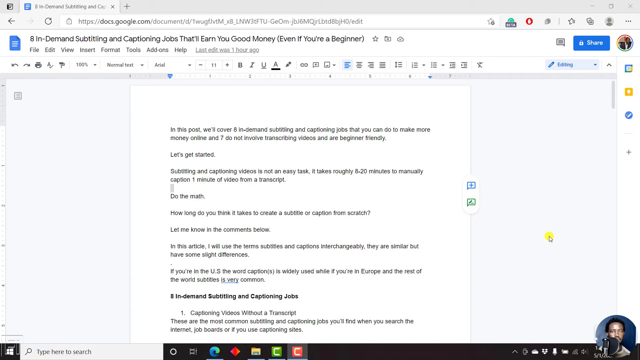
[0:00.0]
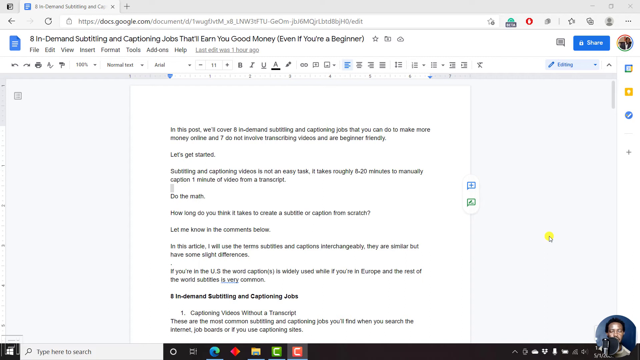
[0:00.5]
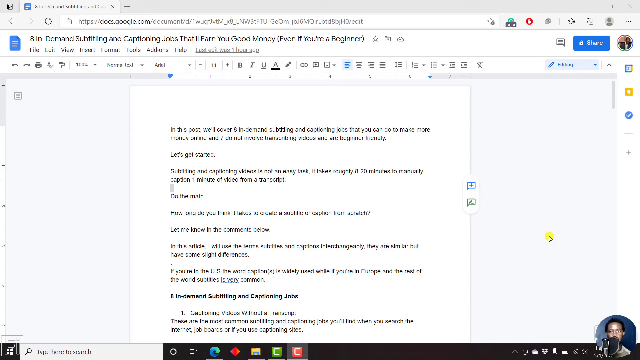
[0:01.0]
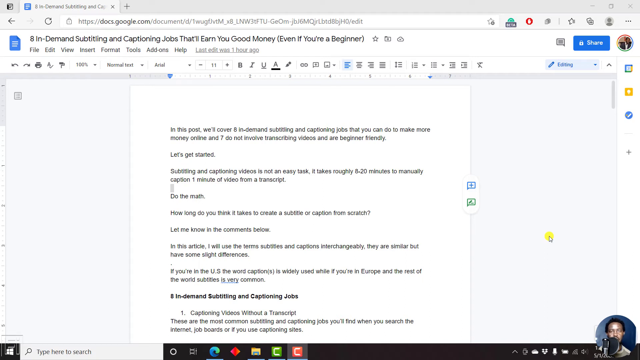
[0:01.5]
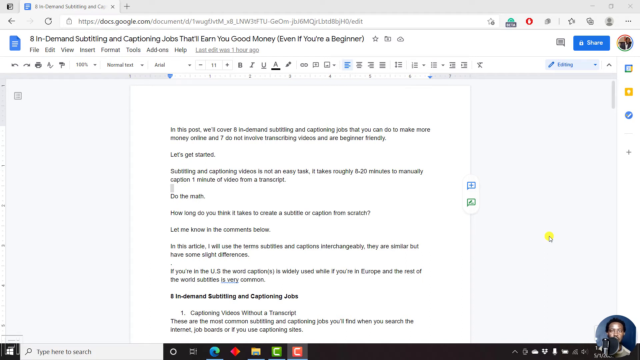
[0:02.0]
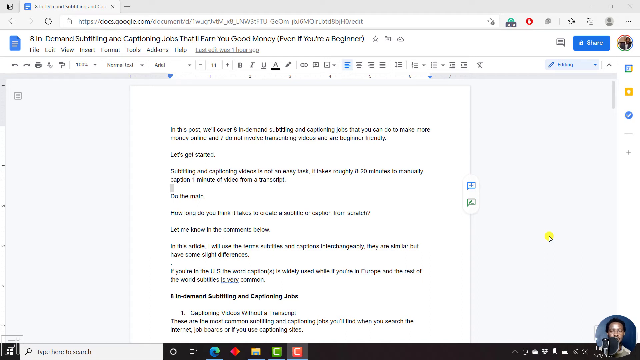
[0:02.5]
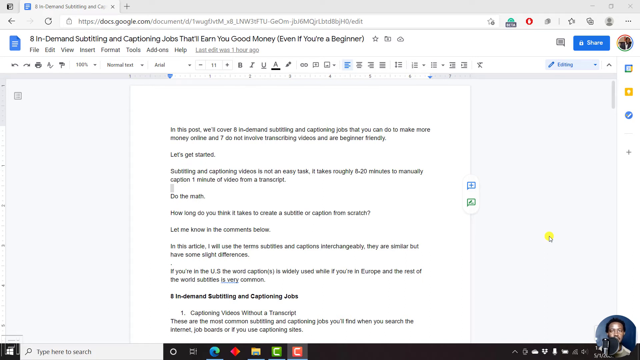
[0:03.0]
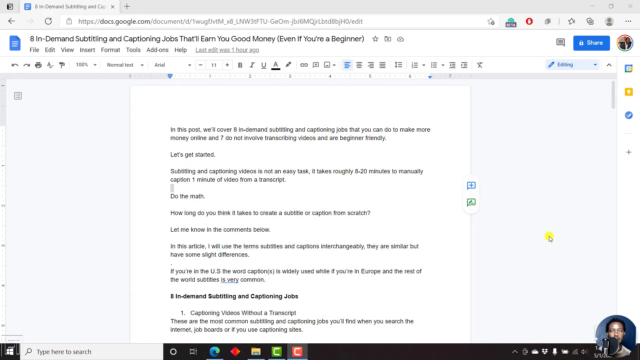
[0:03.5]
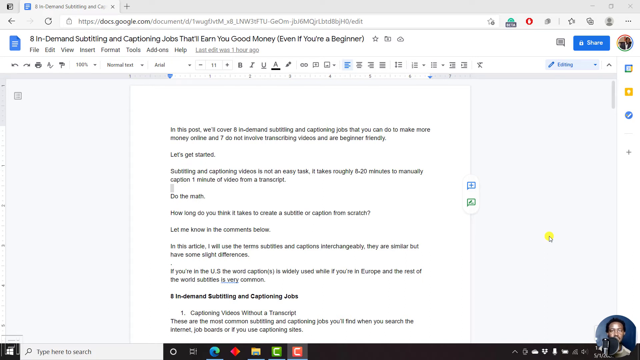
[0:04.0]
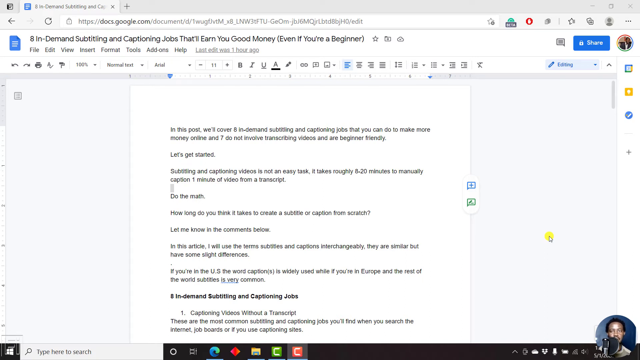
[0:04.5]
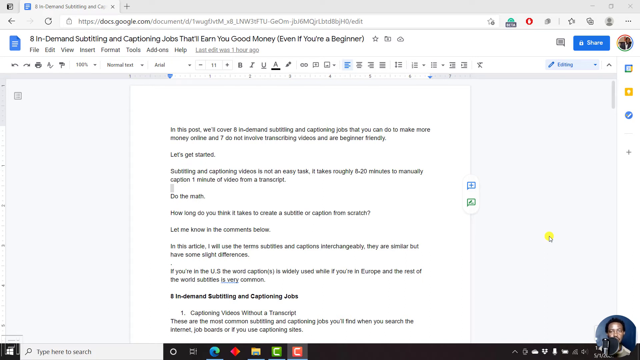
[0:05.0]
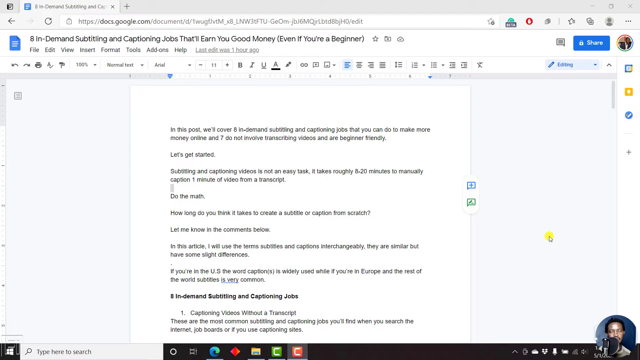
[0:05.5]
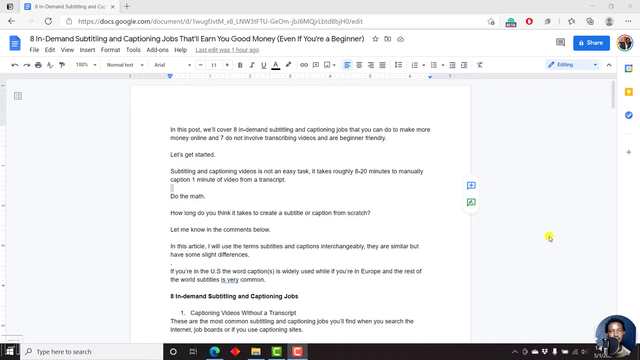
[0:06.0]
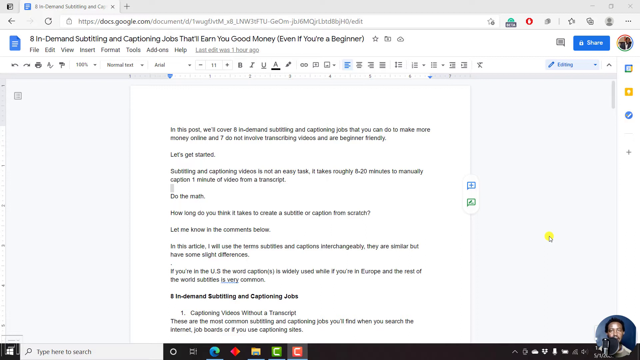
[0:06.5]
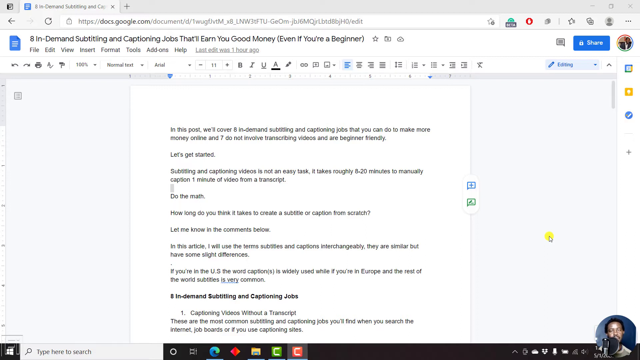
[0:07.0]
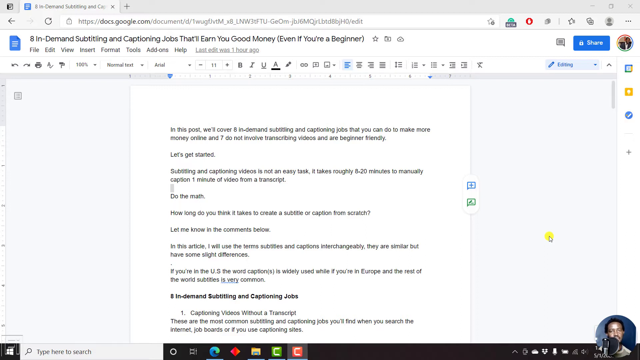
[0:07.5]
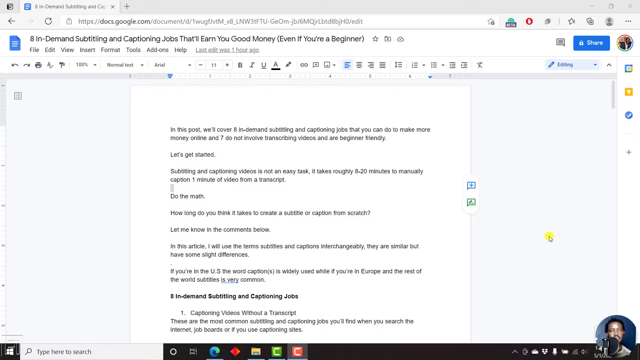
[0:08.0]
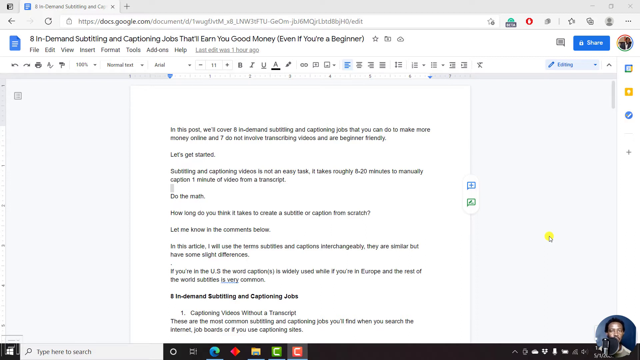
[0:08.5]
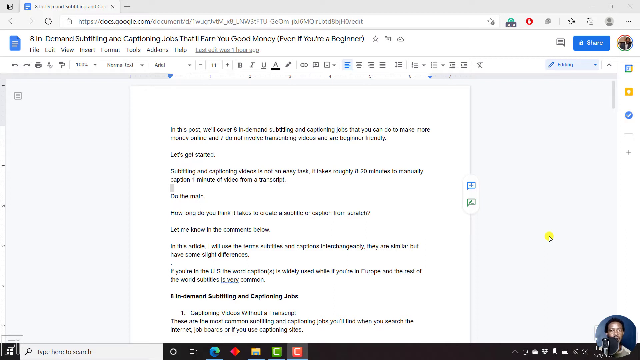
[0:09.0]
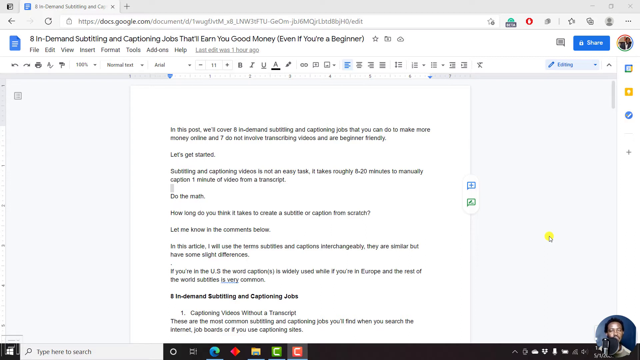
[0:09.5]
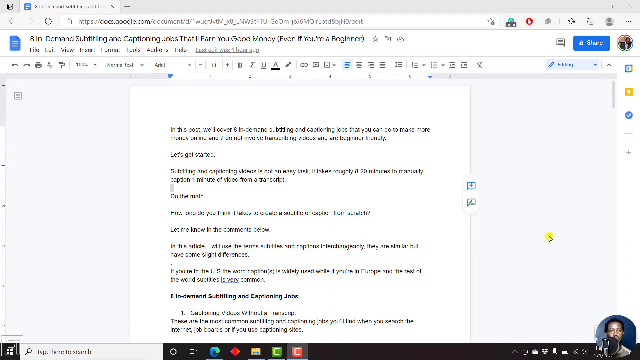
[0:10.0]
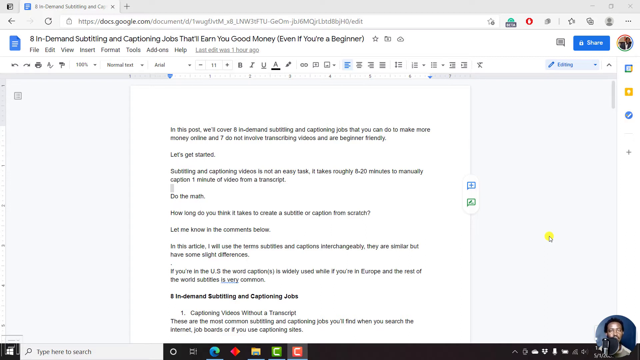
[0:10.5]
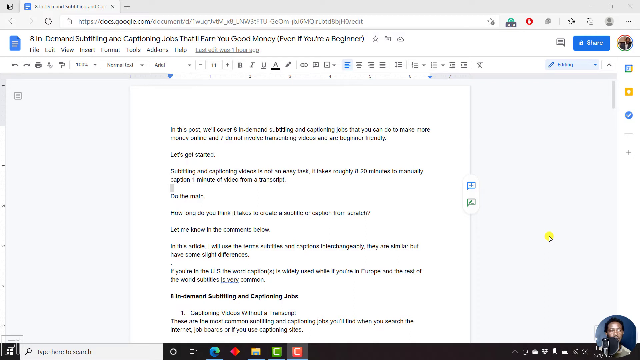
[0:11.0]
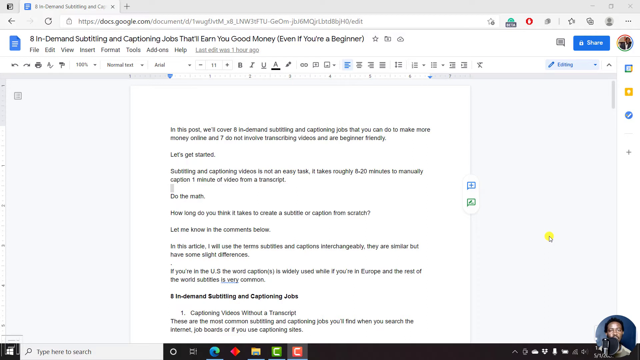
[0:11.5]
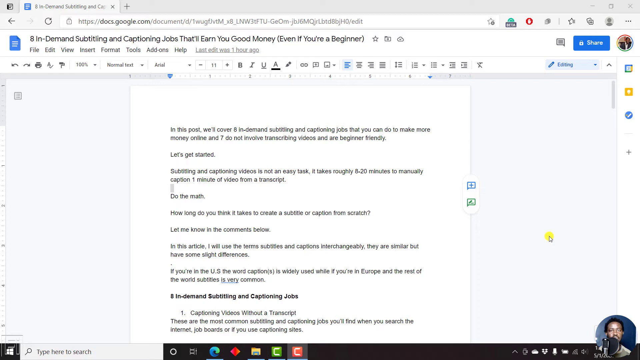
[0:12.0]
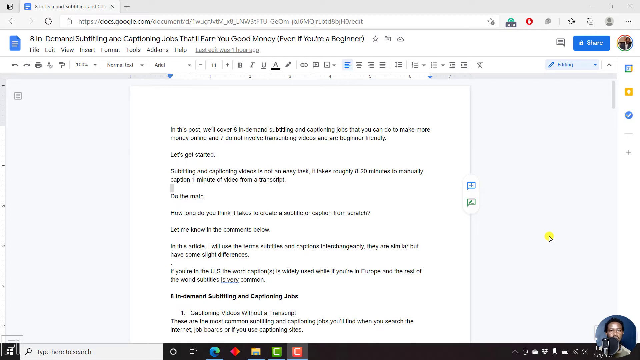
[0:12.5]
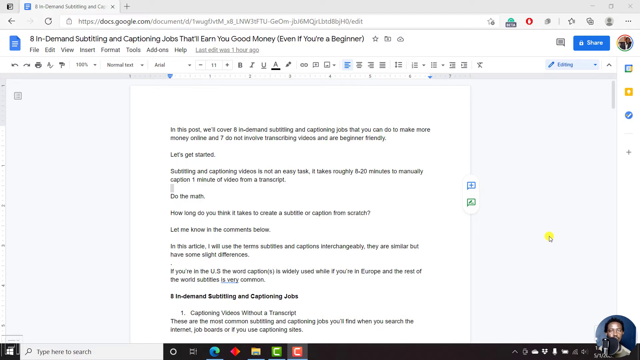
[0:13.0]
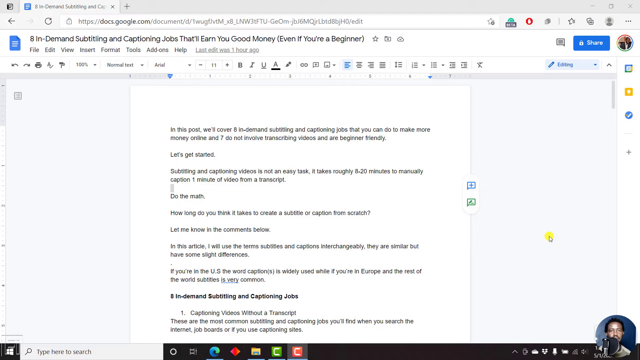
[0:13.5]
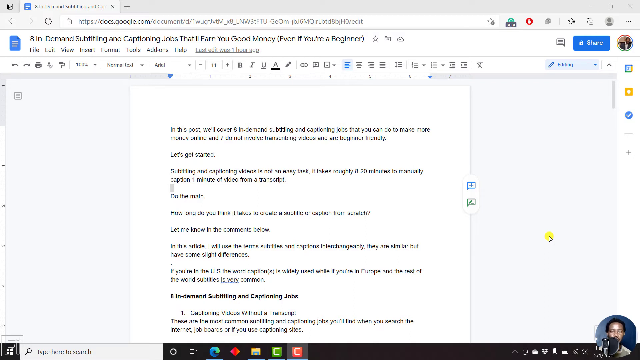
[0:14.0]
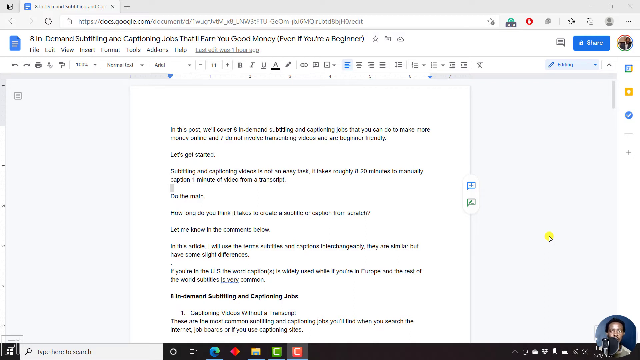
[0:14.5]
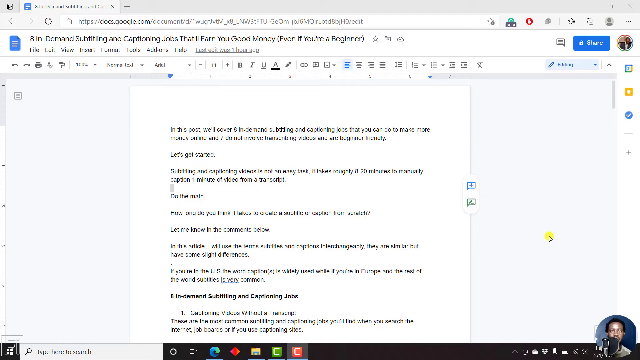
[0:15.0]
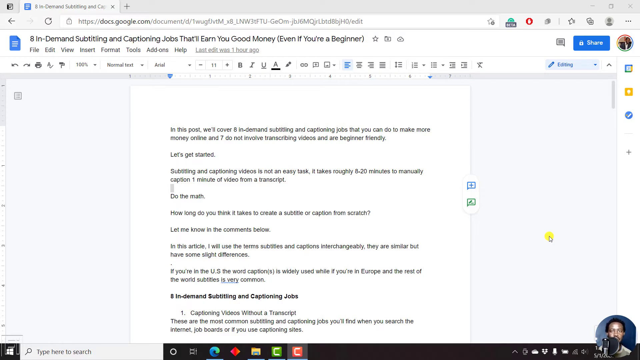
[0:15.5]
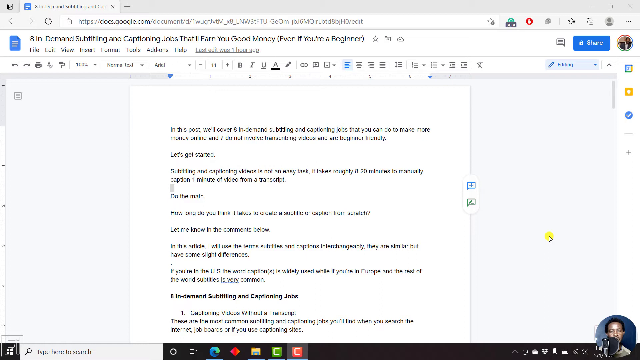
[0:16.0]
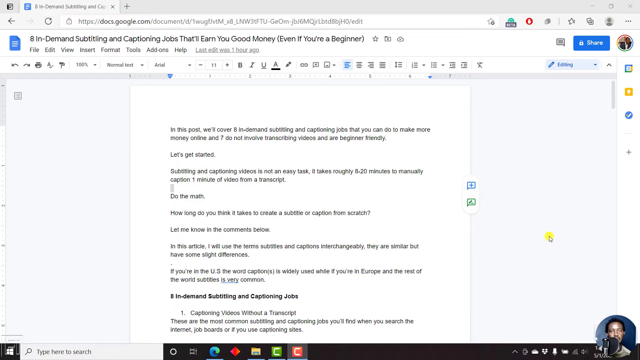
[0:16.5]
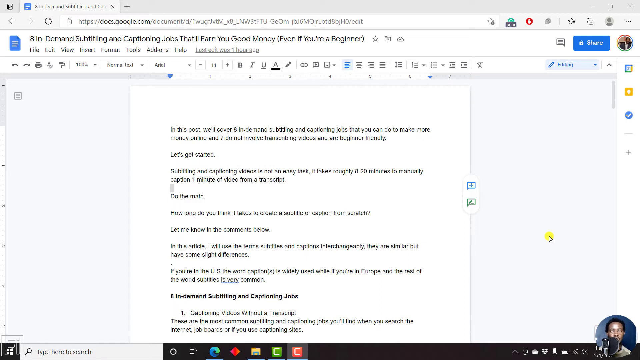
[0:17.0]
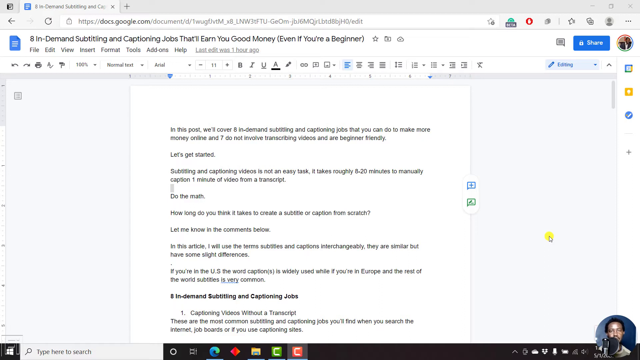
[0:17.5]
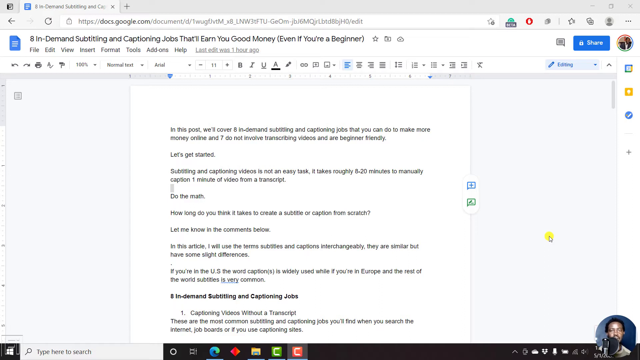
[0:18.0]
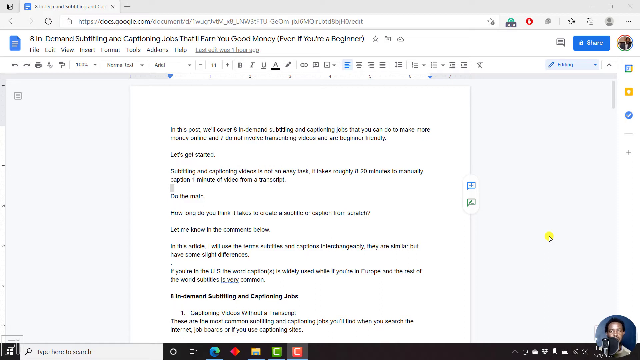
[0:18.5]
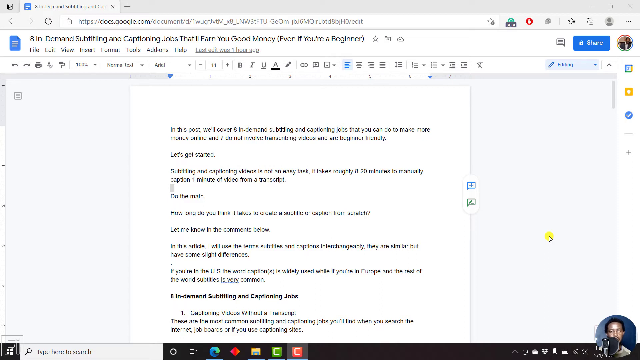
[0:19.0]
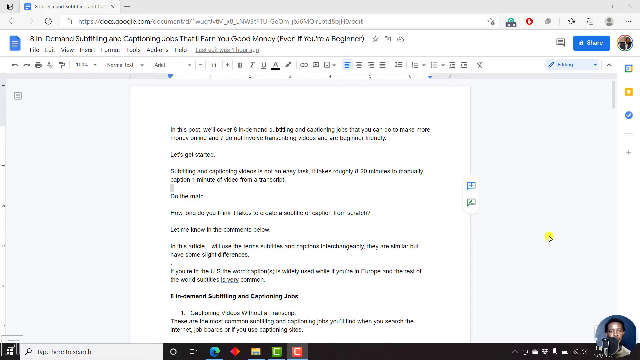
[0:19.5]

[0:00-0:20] A screen recording shows somebody using Google Docs. The document is titled "8 In-Demand Subtitling and Captioning Jobs That'll Earn You Good Money Even If You're A Beginner." The document has different information typed out, and in the bottom right-hand corner there is a picture of a man's face in a circular shape. There are quite a few lines of text at the beginning, then a bolder line of text below that. The text includes "In this post, we'll cover 8 in-demand". The person controlling the computer moves the mouse cursor in a circular manner. There are eight groups of text with a bolded line of text below that.